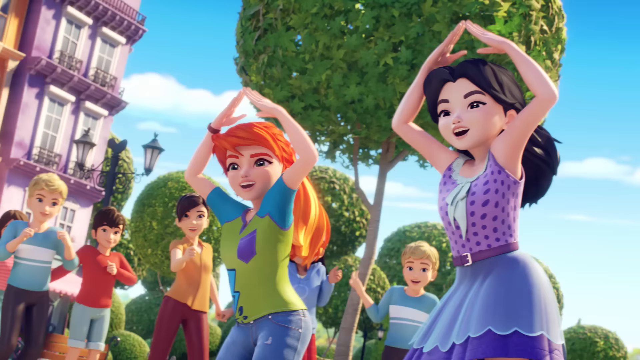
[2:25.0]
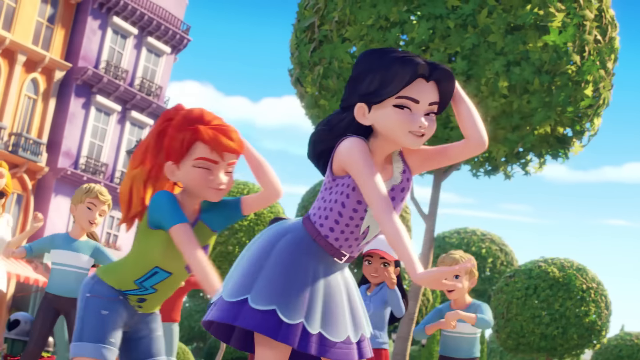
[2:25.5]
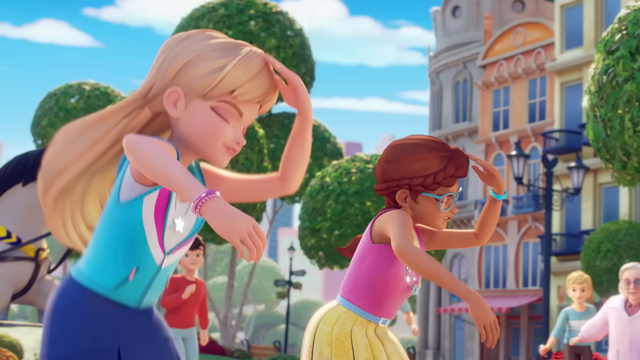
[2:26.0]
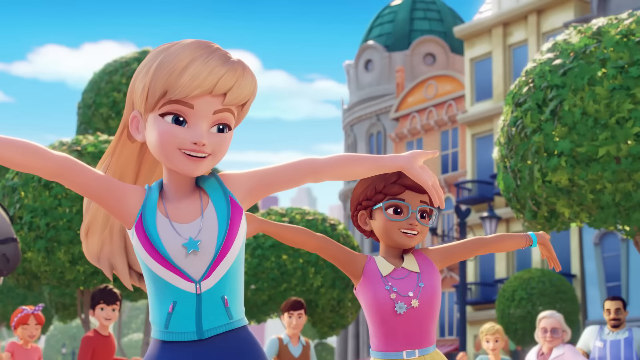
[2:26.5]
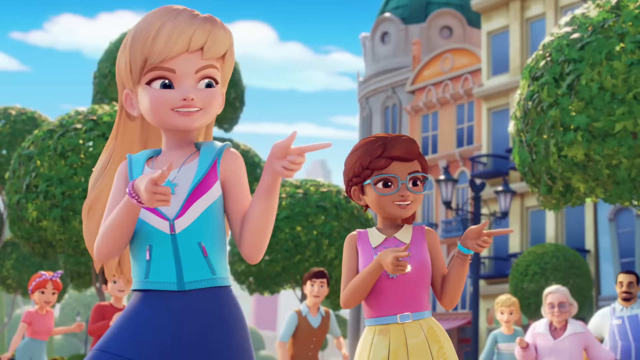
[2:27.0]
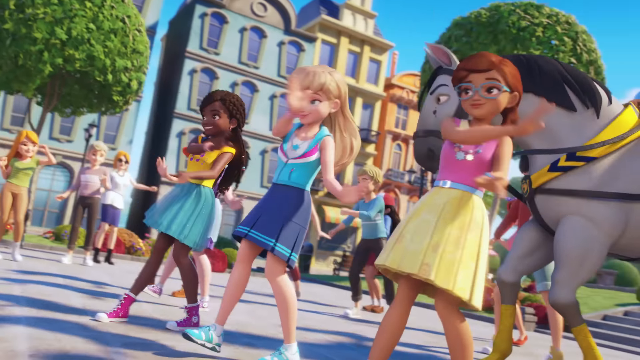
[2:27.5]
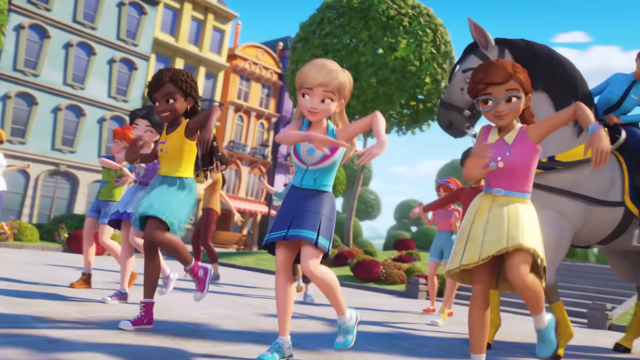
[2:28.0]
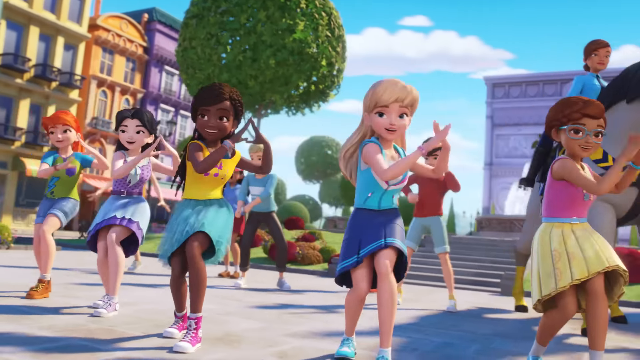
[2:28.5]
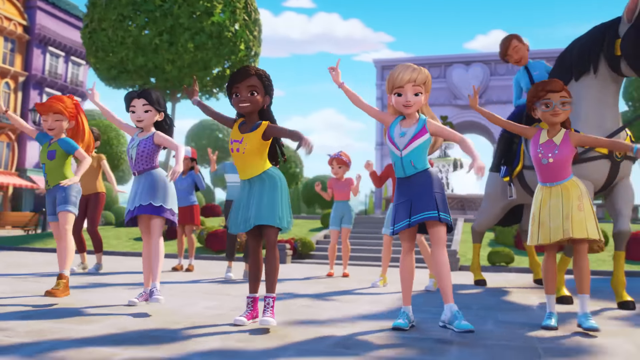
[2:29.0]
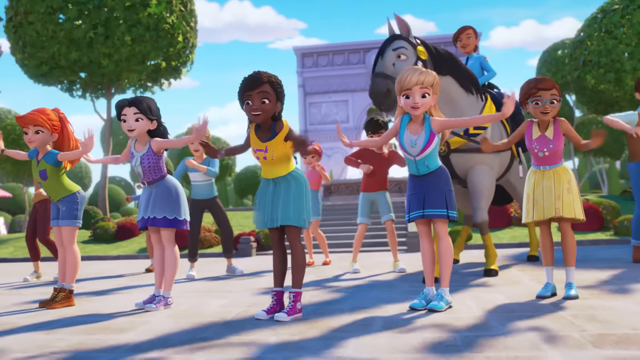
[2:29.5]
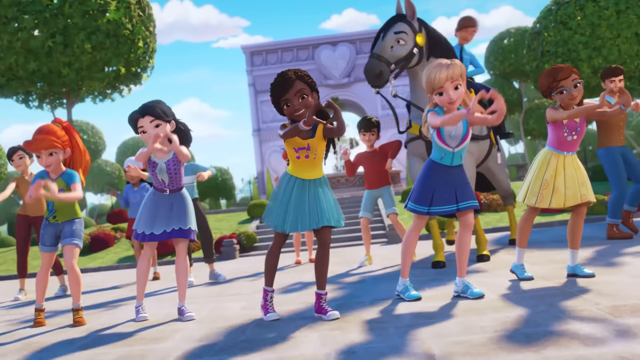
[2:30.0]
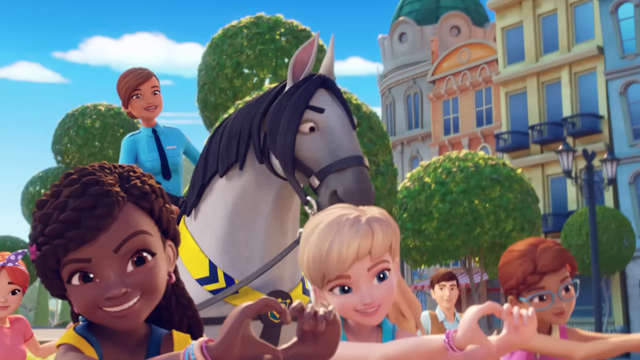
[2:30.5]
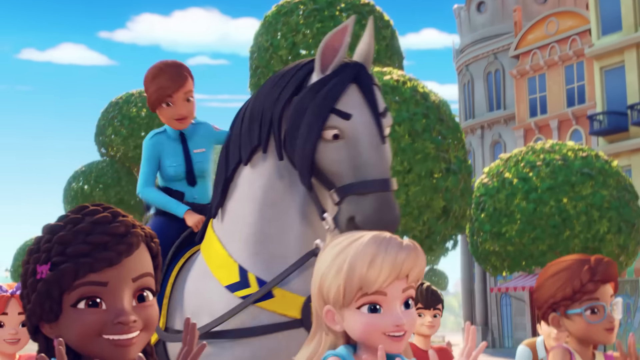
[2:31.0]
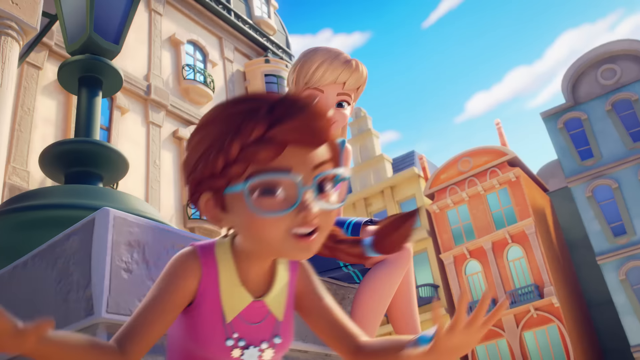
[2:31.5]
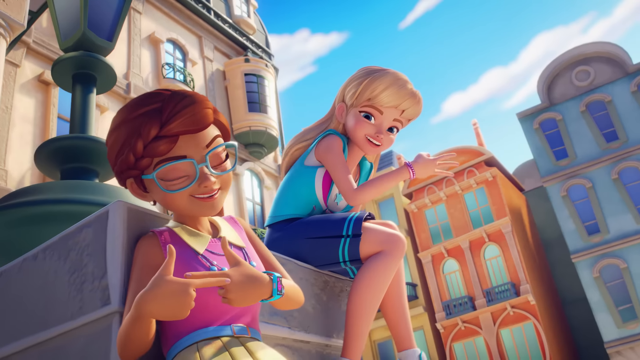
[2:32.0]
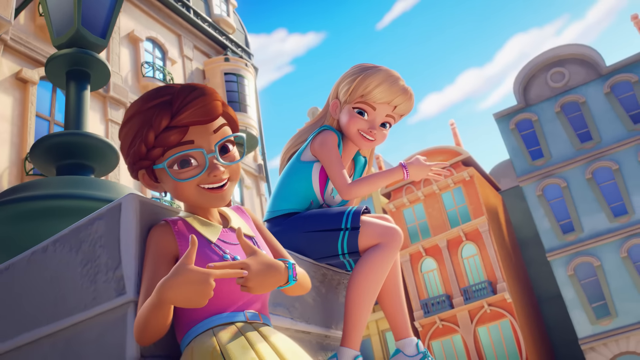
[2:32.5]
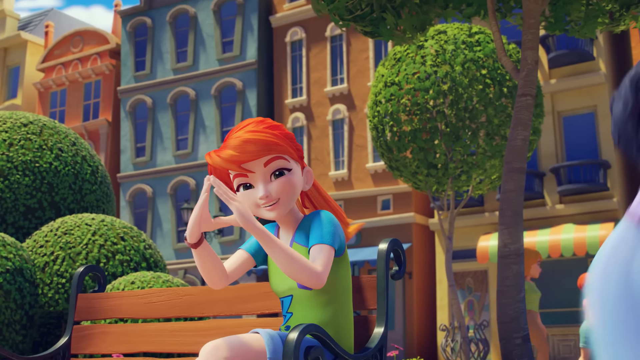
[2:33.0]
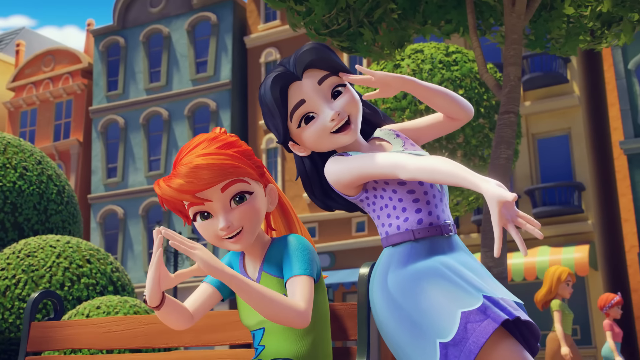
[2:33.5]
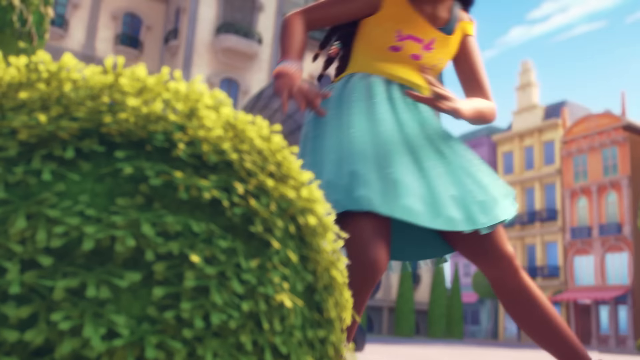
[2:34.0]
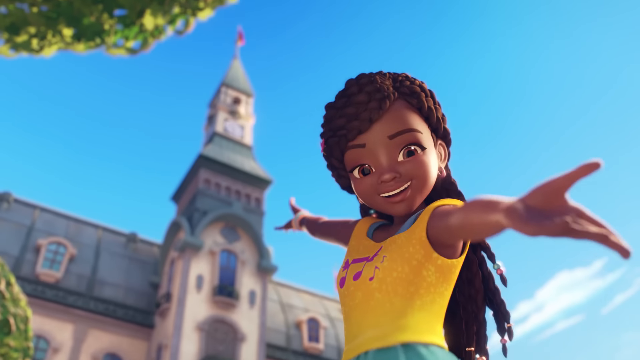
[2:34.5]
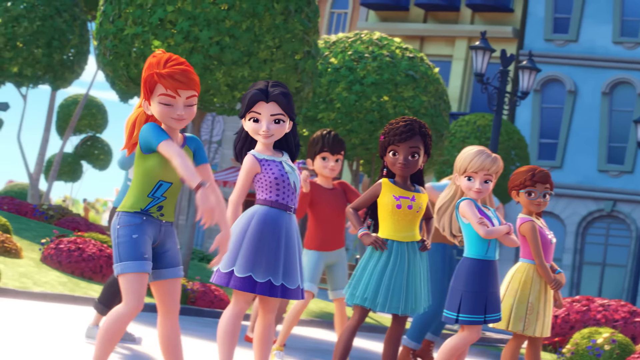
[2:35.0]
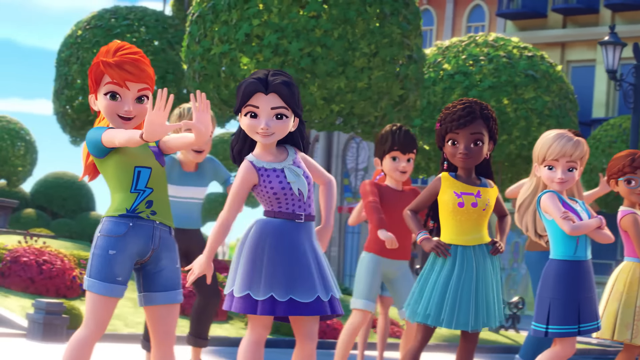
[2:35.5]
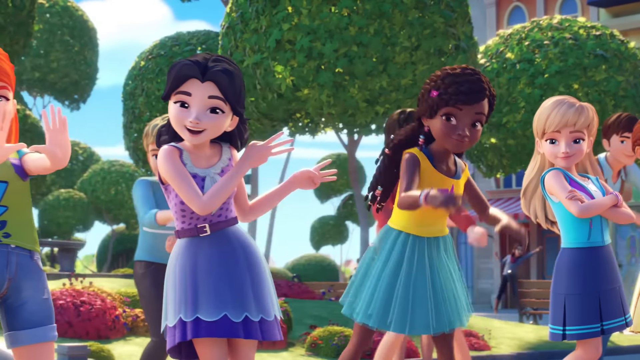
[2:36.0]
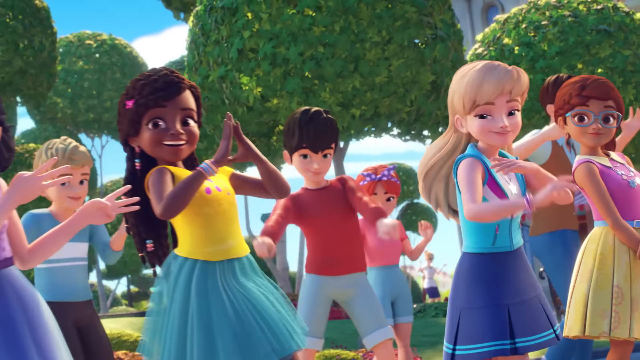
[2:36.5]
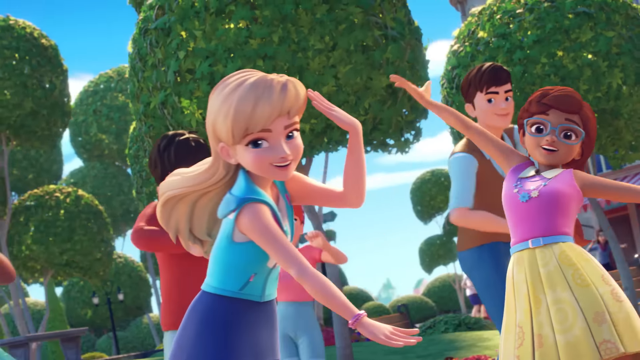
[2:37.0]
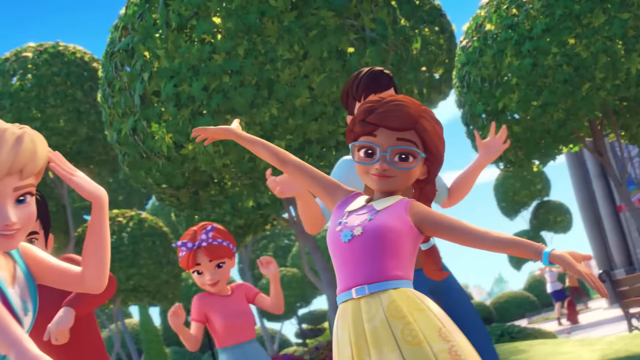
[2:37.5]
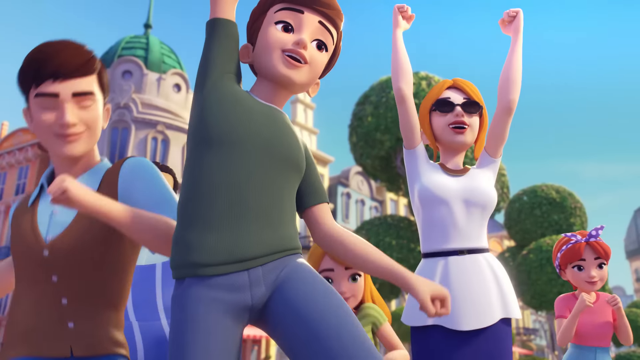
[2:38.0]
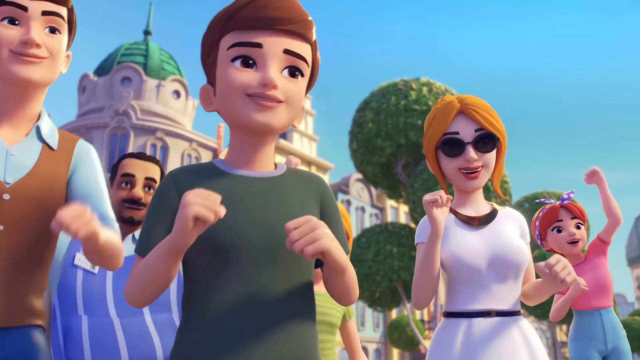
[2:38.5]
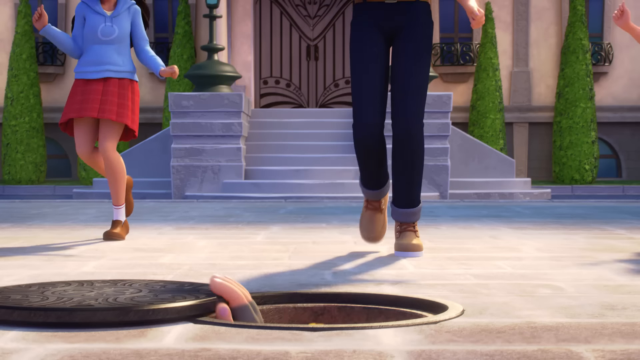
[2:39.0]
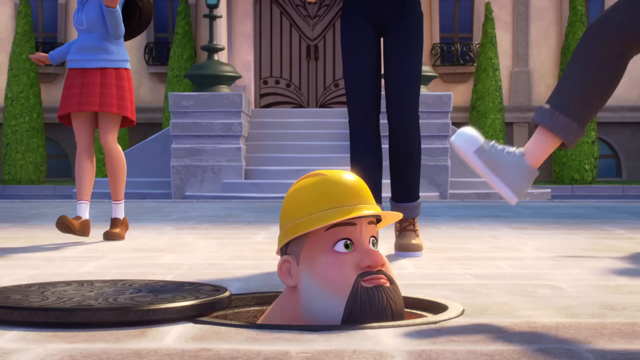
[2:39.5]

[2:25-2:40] The dancing in the square continues, with everybody doing what appears to be some sort of square dance, including the cop and the horse. Everybody looks really happy. The girls pair off and do their poses, except for Andrea, who seems to be the outlier. During the dancing they almost step on a man coming out of the sewer. Each girl kind of has her own little move that she does down the line.